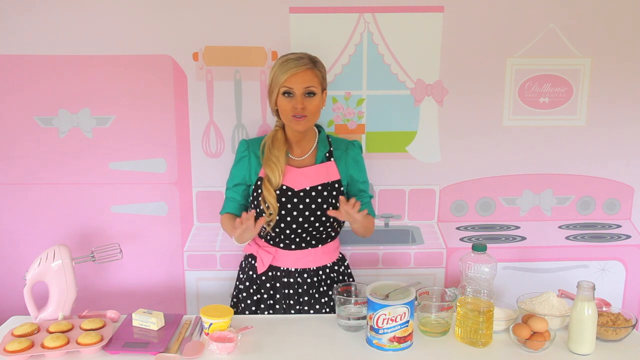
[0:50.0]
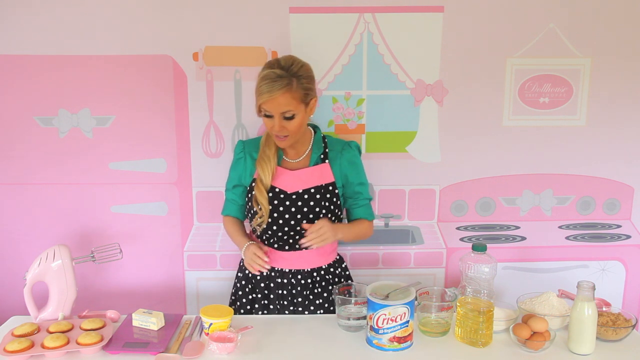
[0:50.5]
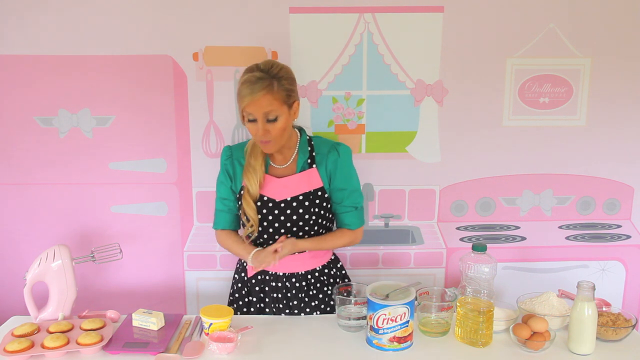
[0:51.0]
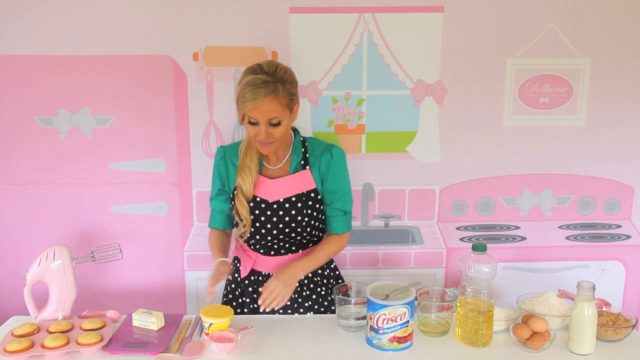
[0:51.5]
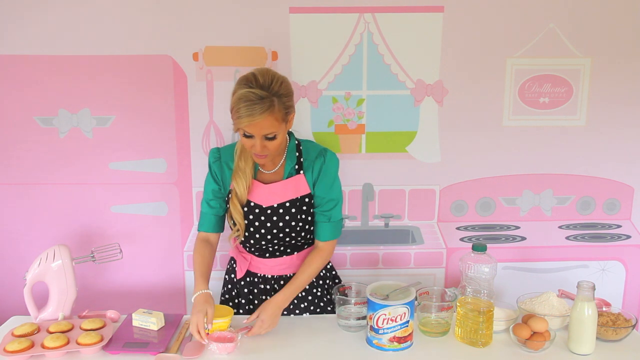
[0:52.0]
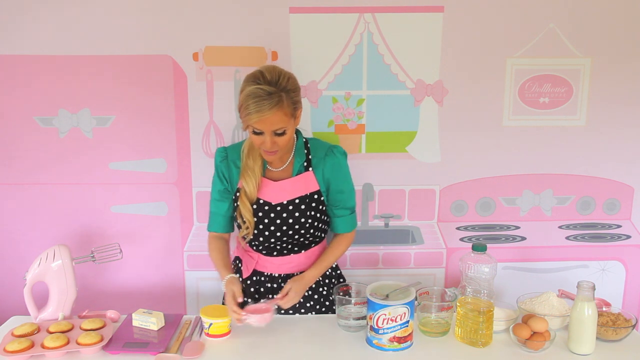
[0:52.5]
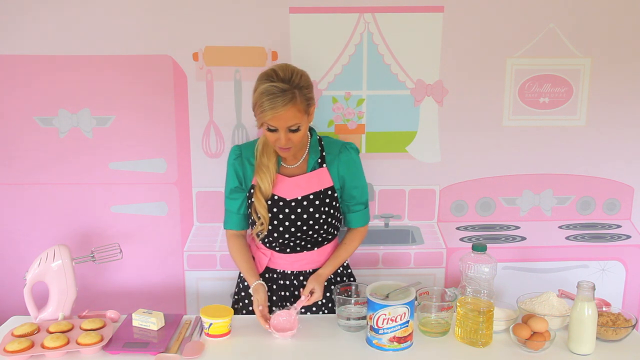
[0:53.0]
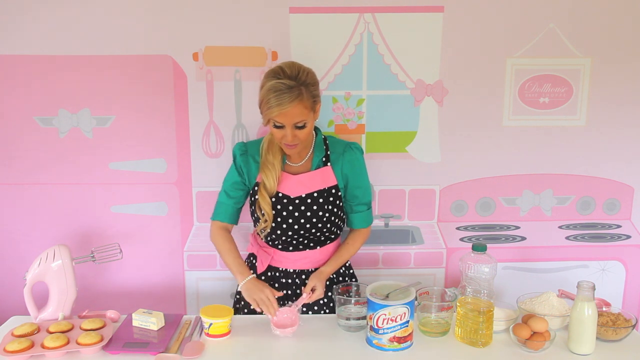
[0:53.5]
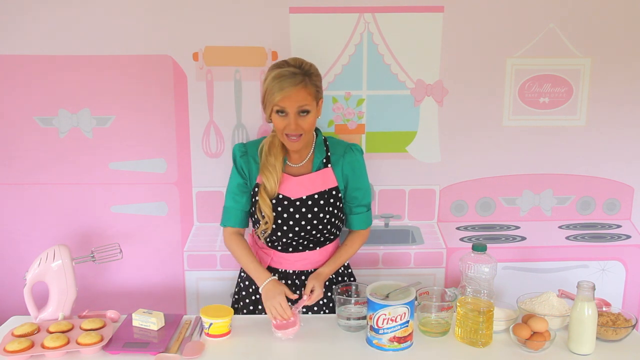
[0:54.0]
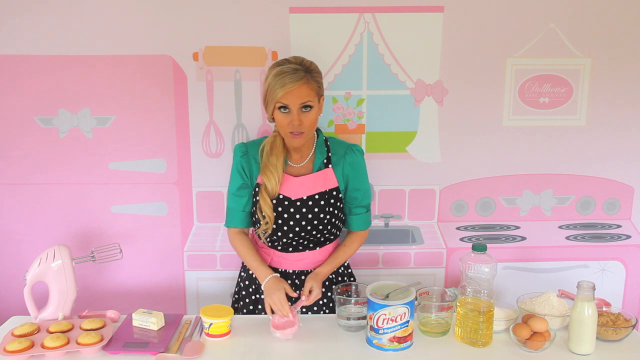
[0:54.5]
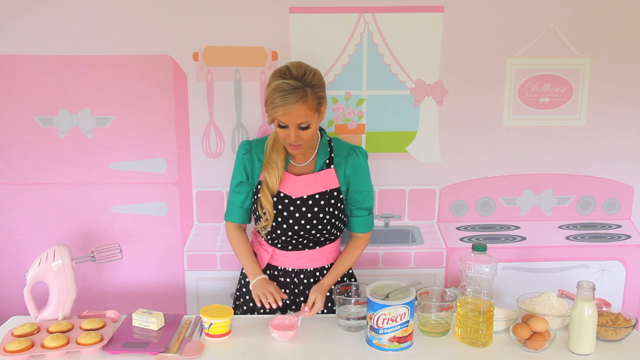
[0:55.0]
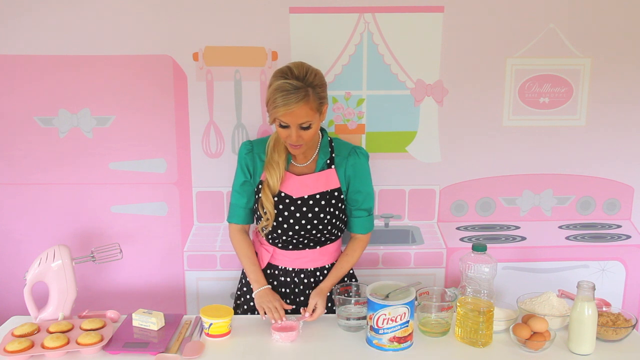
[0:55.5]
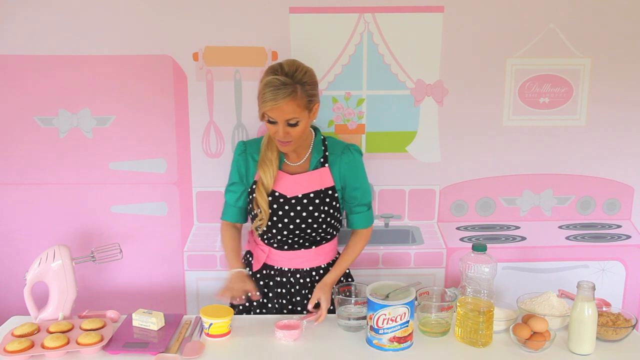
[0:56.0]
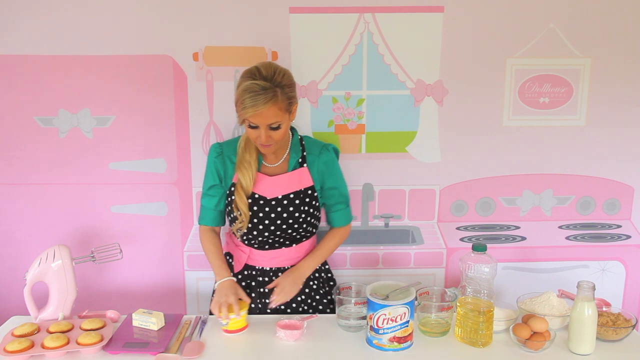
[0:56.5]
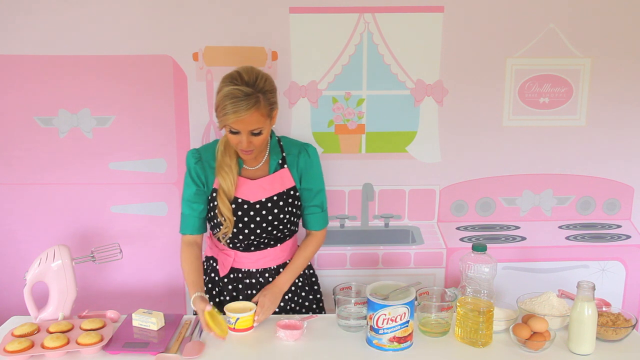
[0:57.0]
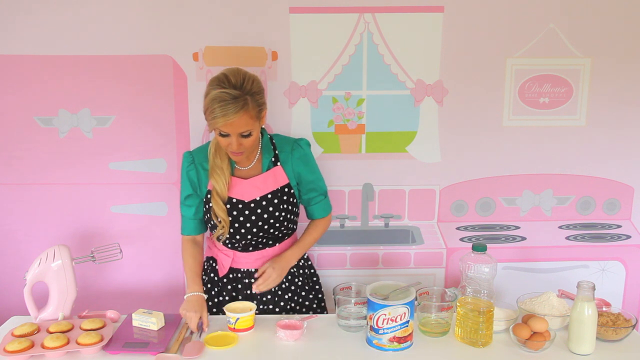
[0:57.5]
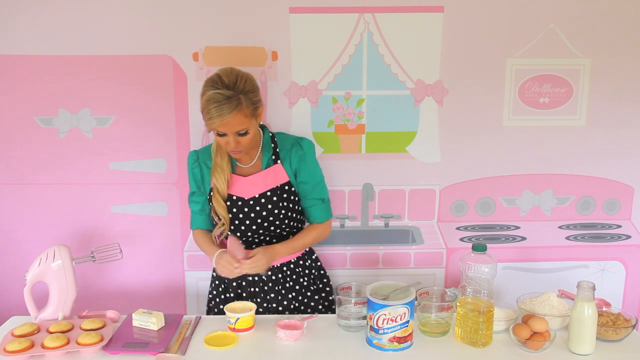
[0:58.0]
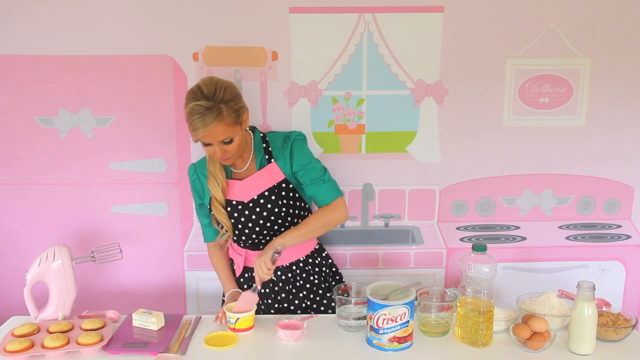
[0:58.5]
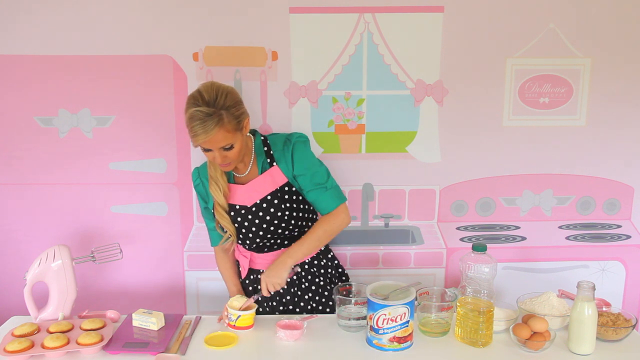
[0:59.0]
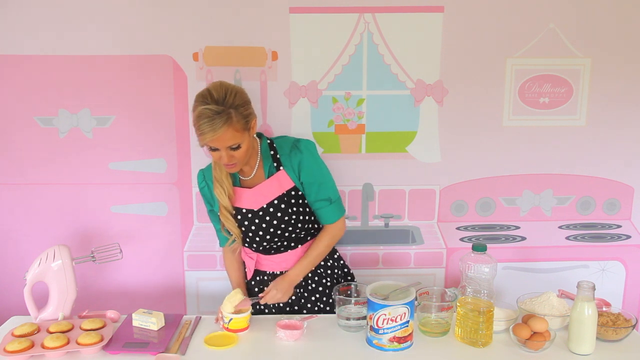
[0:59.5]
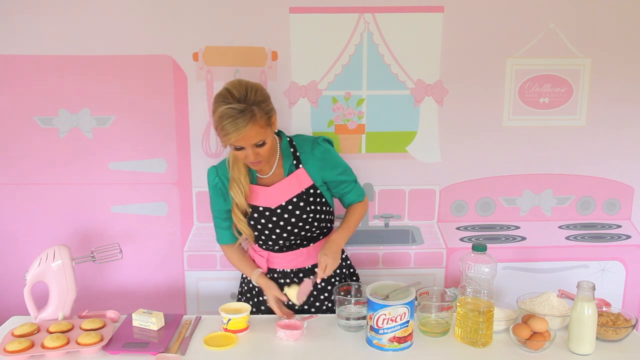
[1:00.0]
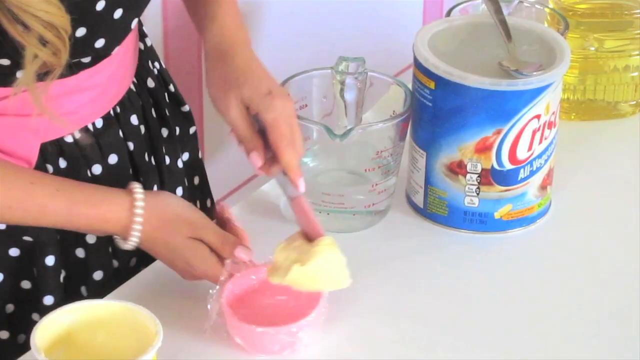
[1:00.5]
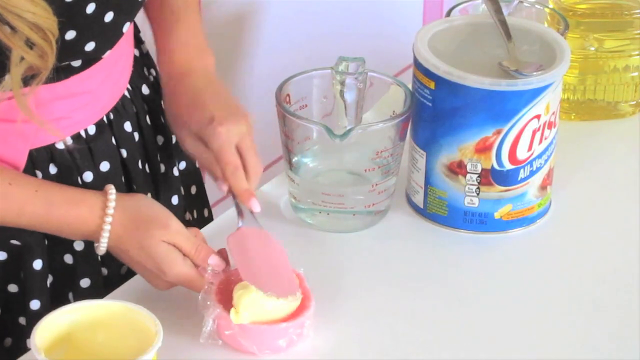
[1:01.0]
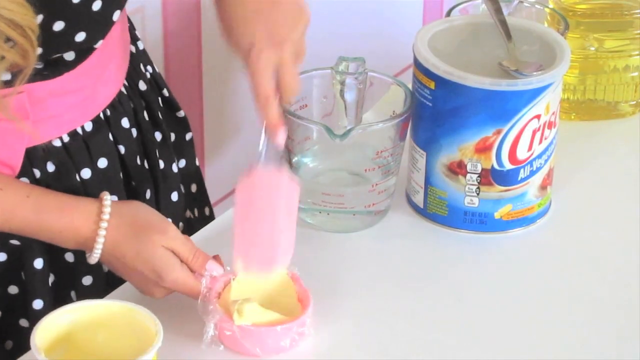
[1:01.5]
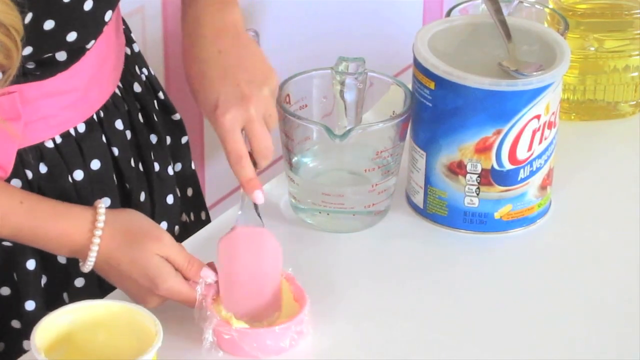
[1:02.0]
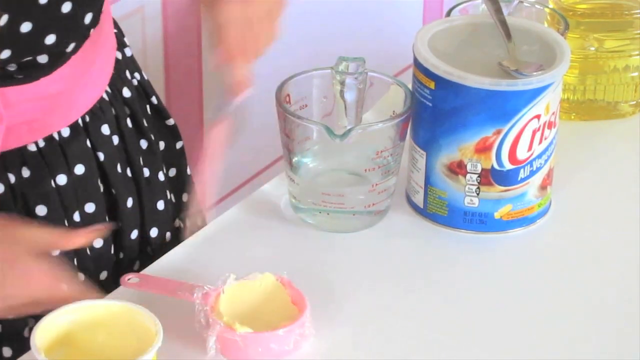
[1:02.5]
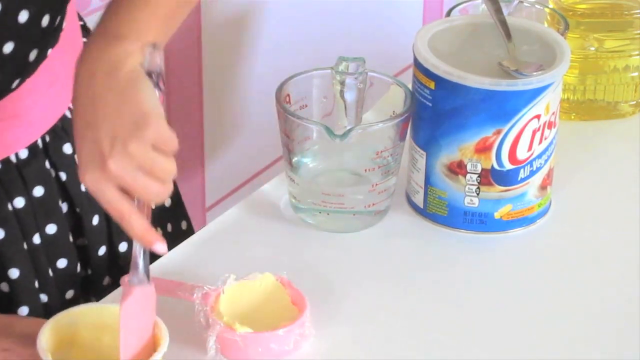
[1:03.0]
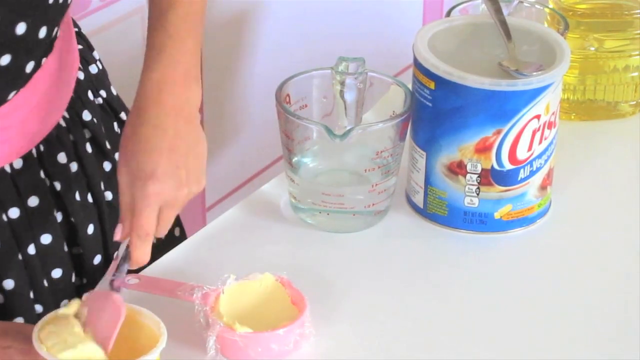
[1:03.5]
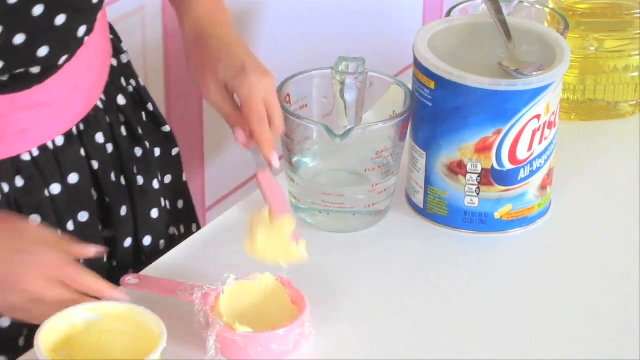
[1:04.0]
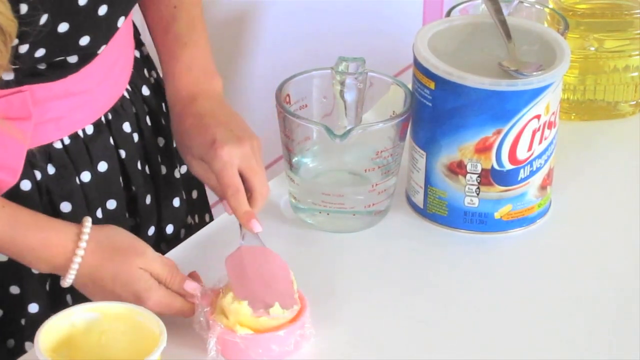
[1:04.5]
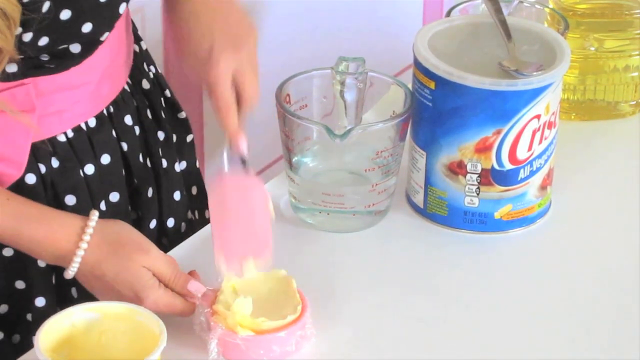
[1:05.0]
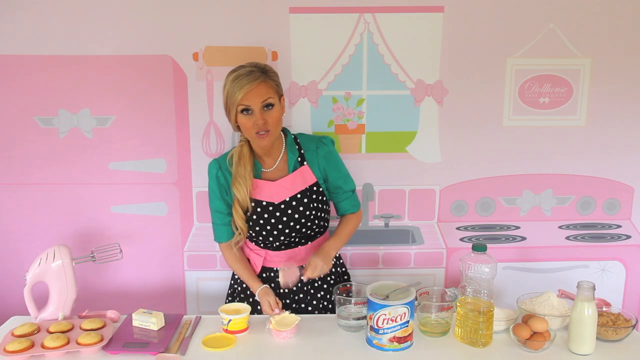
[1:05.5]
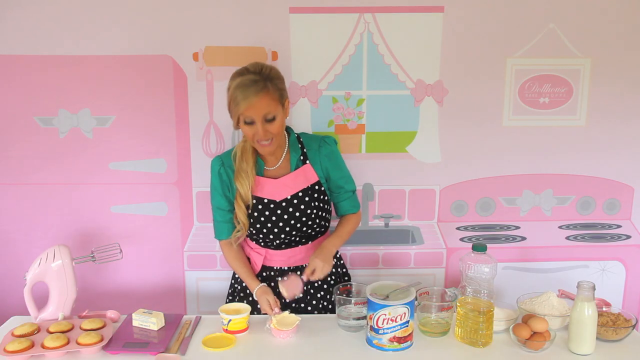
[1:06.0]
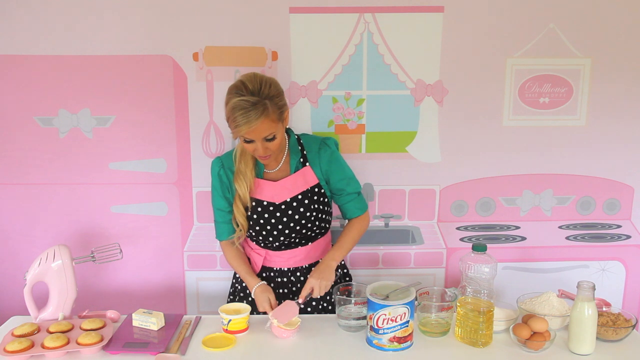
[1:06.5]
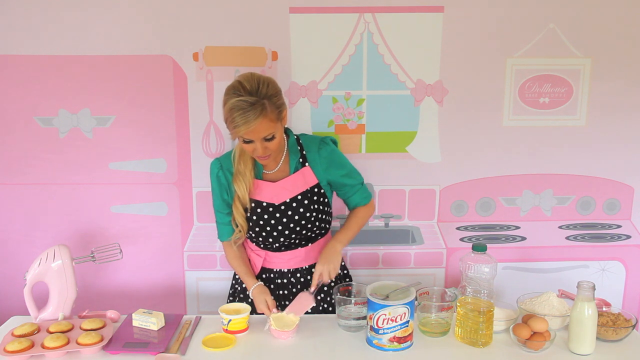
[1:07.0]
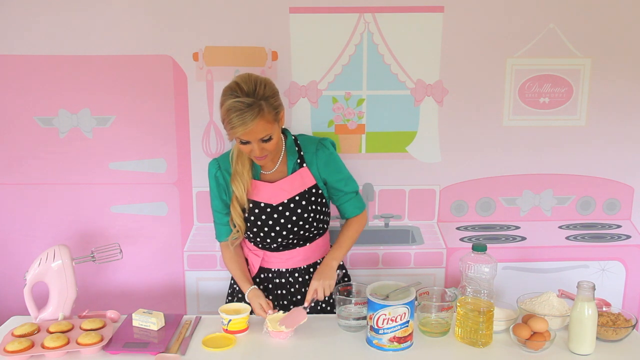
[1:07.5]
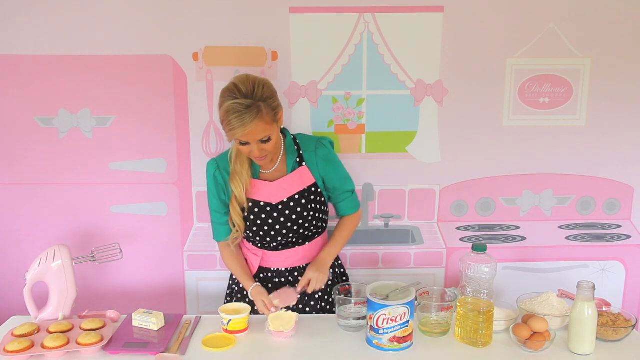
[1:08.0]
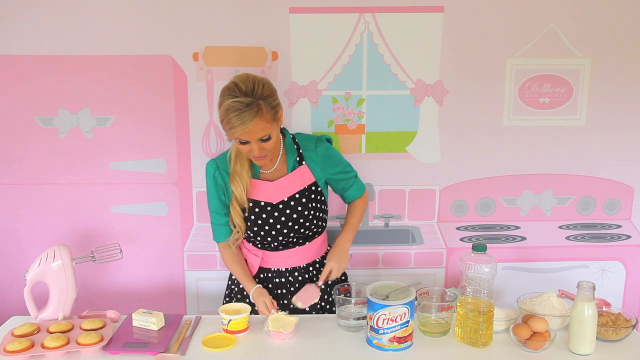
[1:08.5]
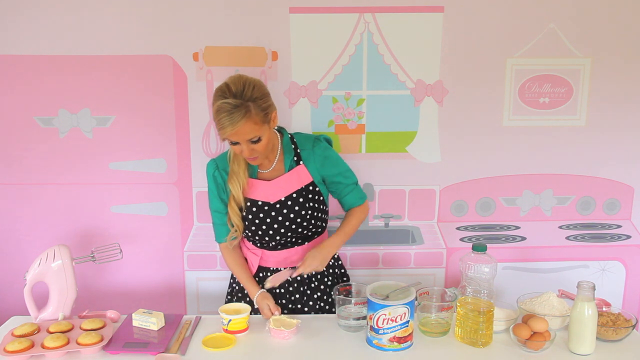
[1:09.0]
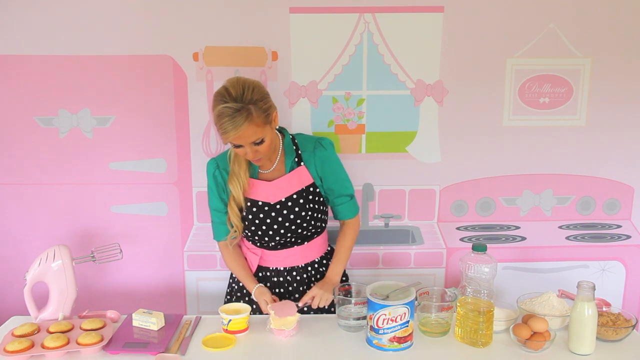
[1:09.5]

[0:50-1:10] She continues explaining something with her hands in her kitchen. She picks up a pink spoon, one of her pink baking spoons that mostly have the measurements written on them; it seems to have some product in it, and she touches the product a little. She then opens a yellow container on the left side, takes out a spoon and scoops out something that appears to be like ice cream, placing it into the pink spoon that was on the table. She scoops a second amount of the same product, spreads it in the pink spoon and removes the leftover bits, all while holding the pink spoon in her left hand.